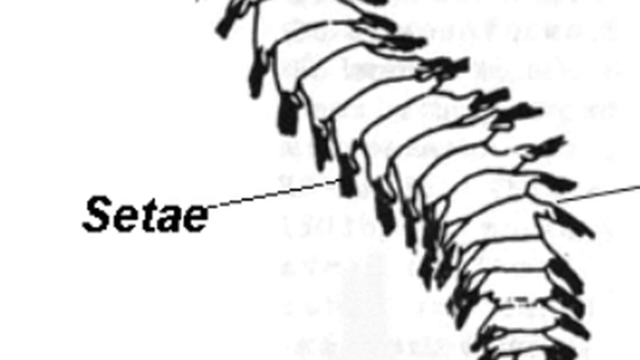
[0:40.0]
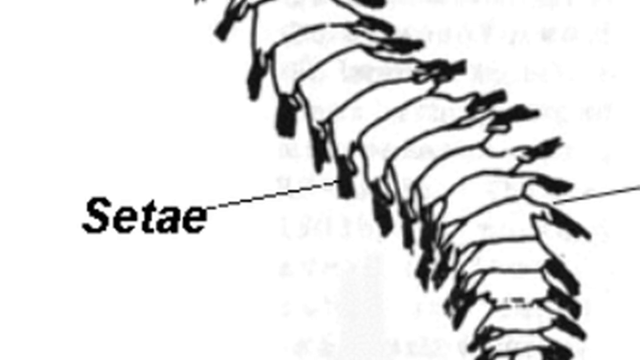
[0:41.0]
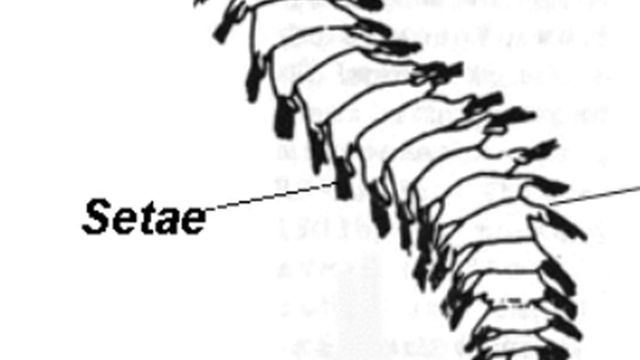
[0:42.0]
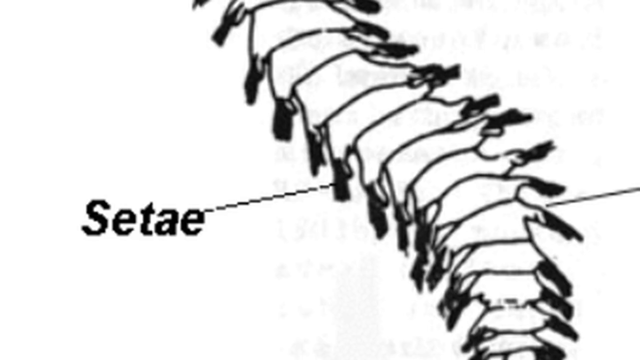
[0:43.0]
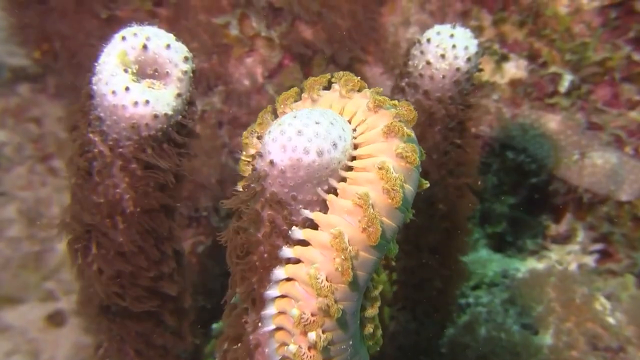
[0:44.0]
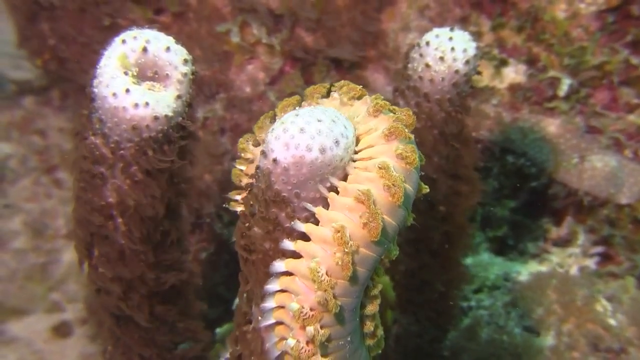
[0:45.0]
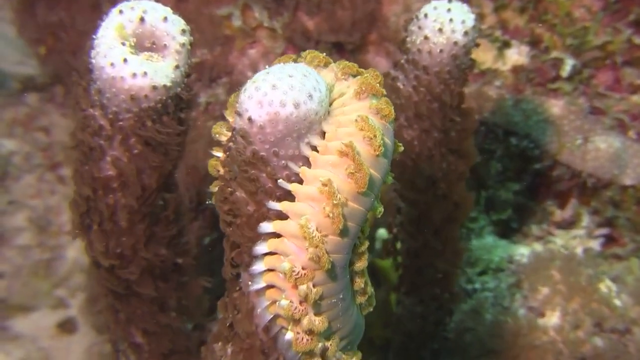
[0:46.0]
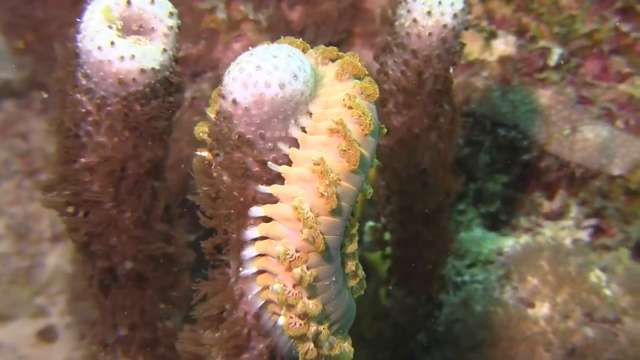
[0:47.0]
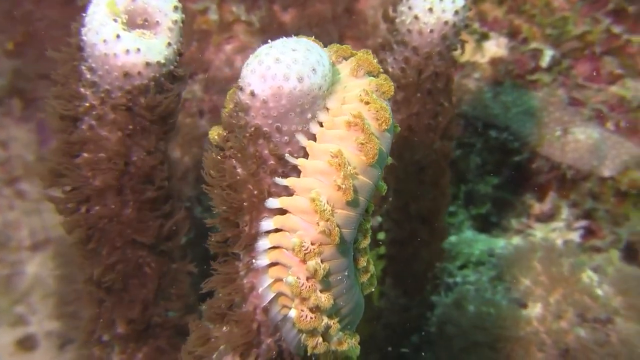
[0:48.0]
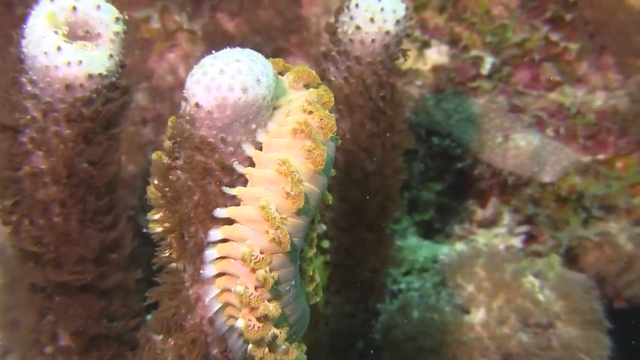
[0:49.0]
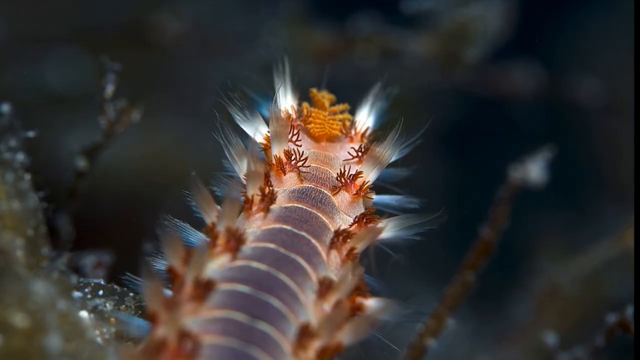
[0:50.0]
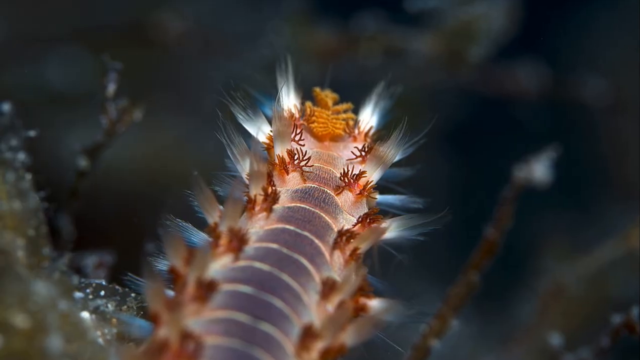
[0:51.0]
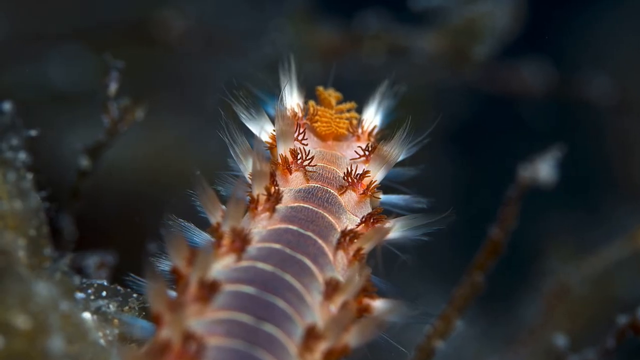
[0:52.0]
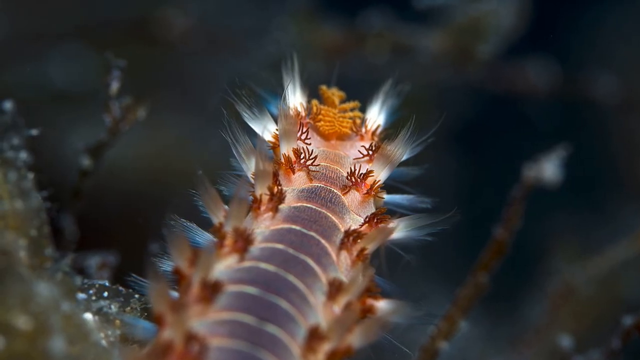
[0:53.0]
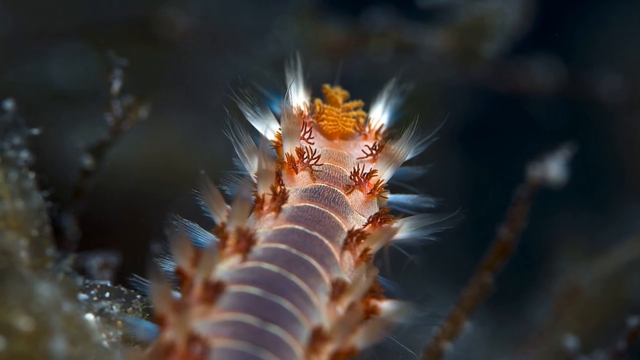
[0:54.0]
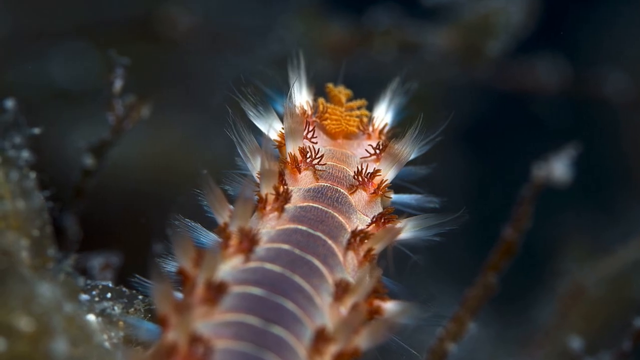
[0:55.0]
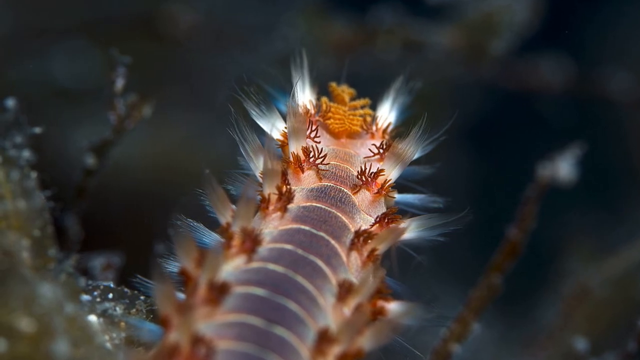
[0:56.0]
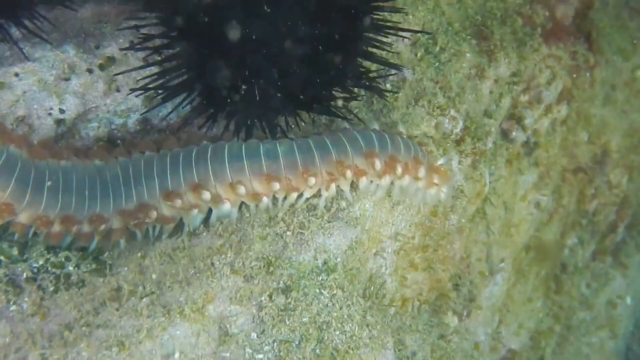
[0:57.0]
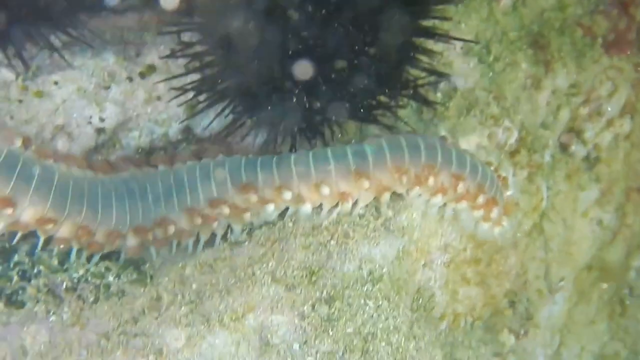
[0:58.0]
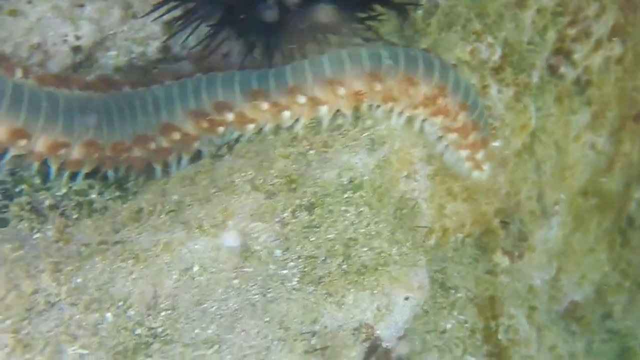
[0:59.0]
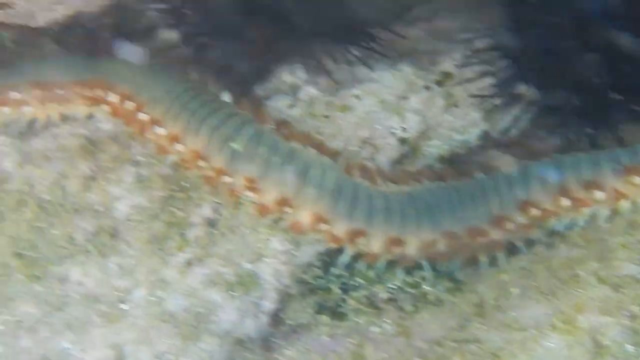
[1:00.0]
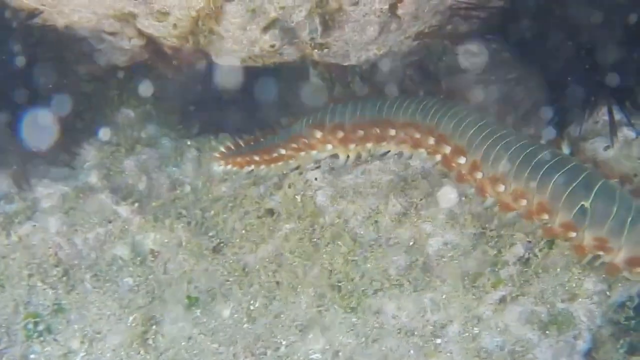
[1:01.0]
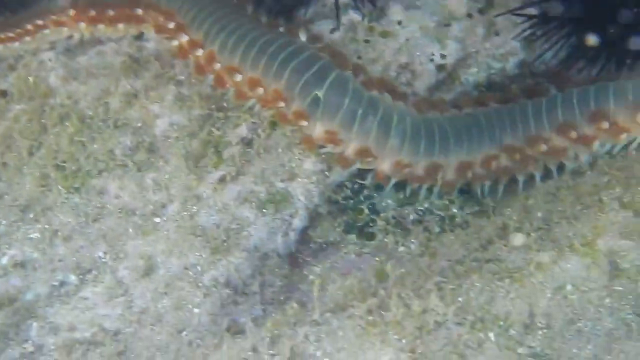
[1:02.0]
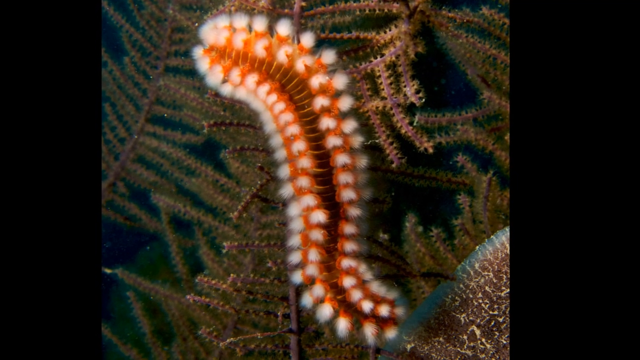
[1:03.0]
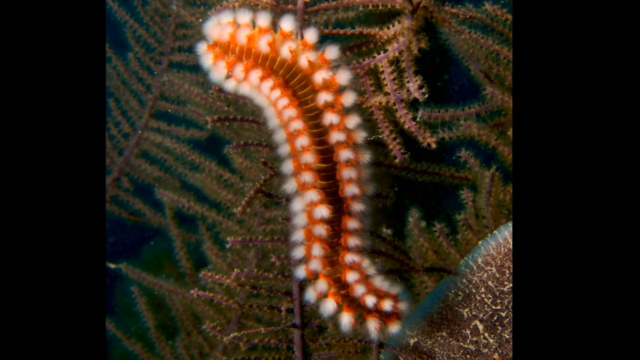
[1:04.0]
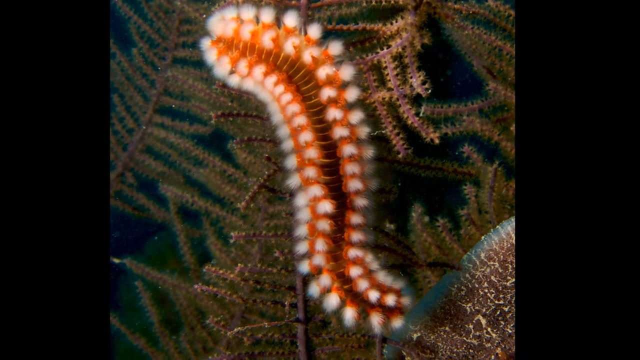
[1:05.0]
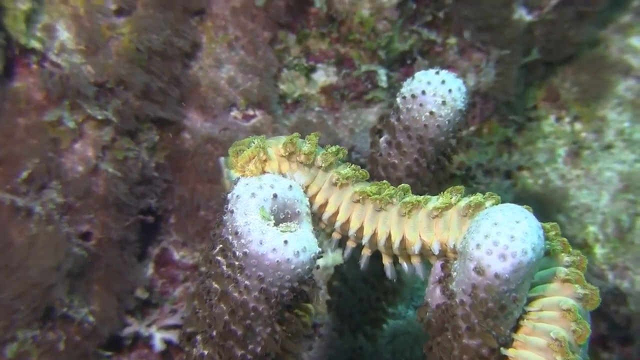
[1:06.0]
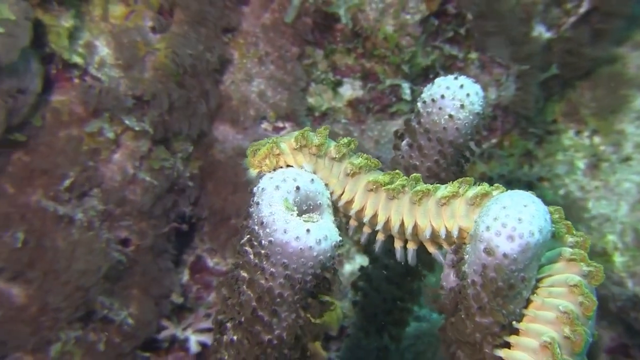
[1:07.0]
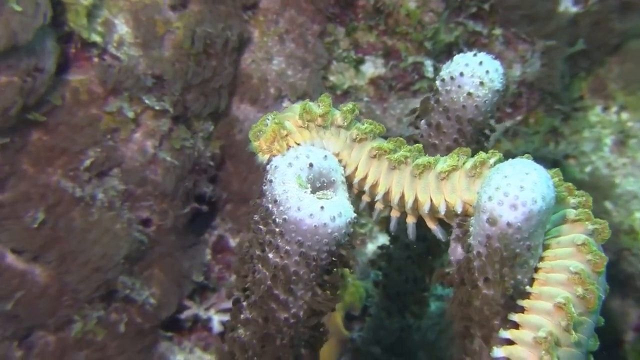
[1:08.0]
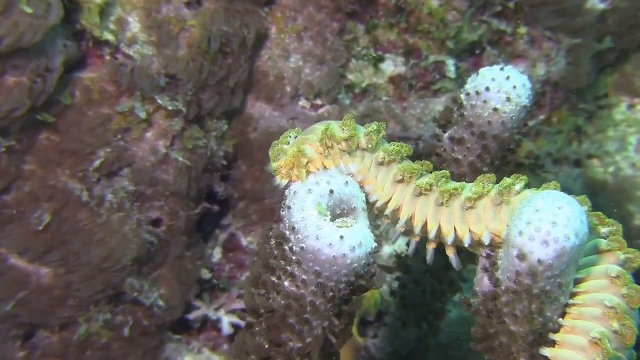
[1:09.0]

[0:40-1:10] The drawing still points out the setae area, the little white legs, and the view zooms out on the text. The same kind of animal then wraps itself around a tall piece of coral; it looks completely wrapped around it, maybe eating off of it, and it moves and flows a bit in the water as the coral softly flows. Next comes what looks like an up-close still image of the animal, with leg-like parts sticking out from the right and the left that look almost like brushes. The view pans on the image, then cuts to more video footage of a different giant centipede-like creature that looks quite wide and much longer than the others. It crawls from the left of the screen to the right and downward a bit. The camera pans toward the left, showing that it is significantly longer than the others, then pans toward the right. It then cuts to what looks like another image of the animal, possibly of its bottom side, this time an orange and white version.